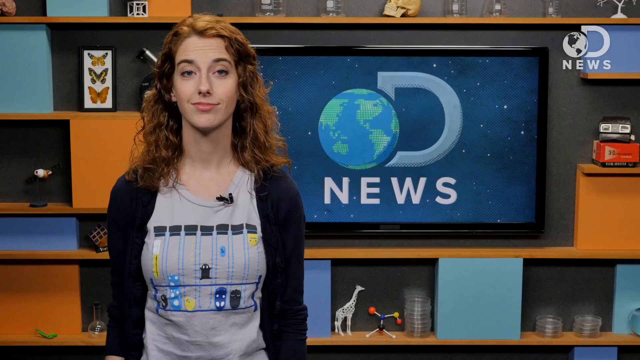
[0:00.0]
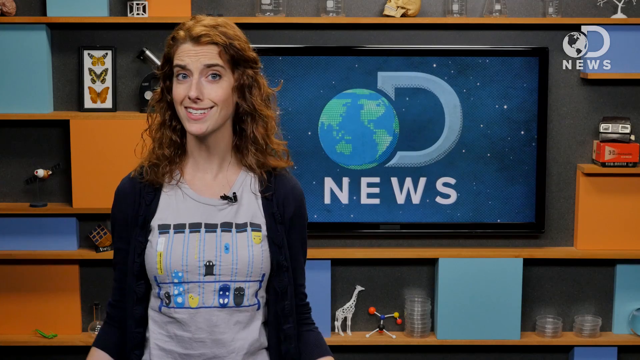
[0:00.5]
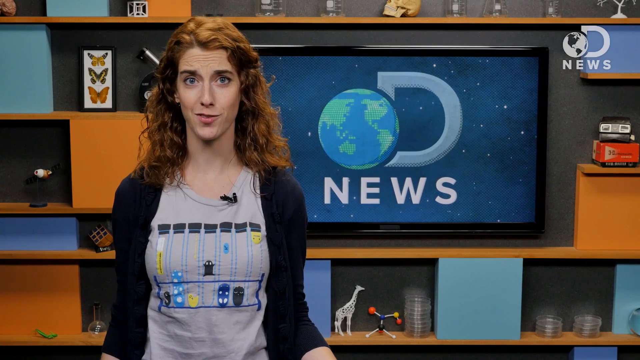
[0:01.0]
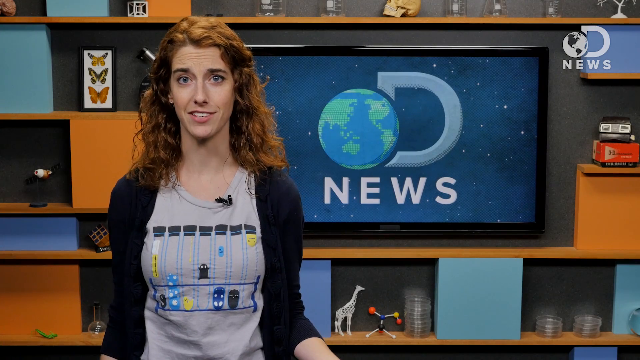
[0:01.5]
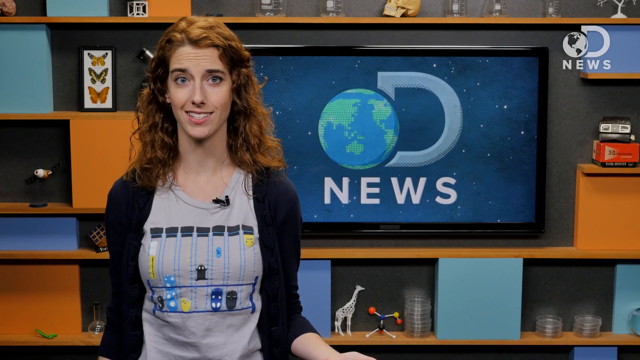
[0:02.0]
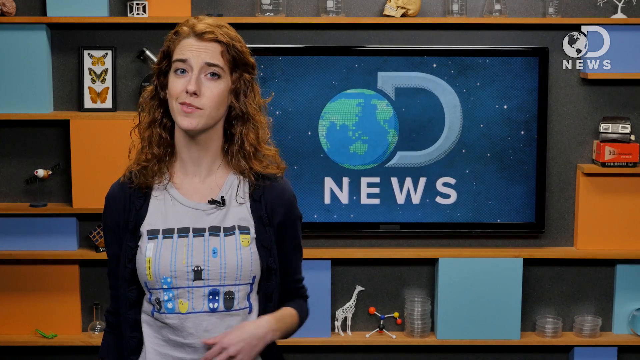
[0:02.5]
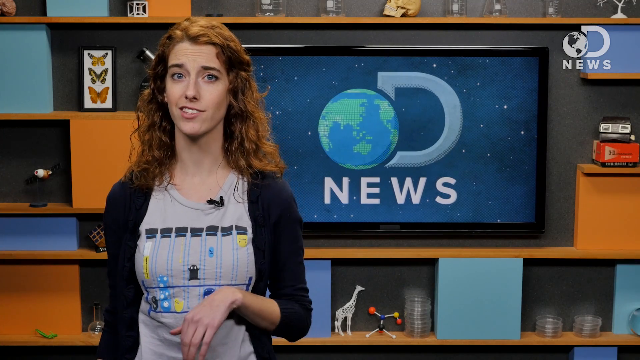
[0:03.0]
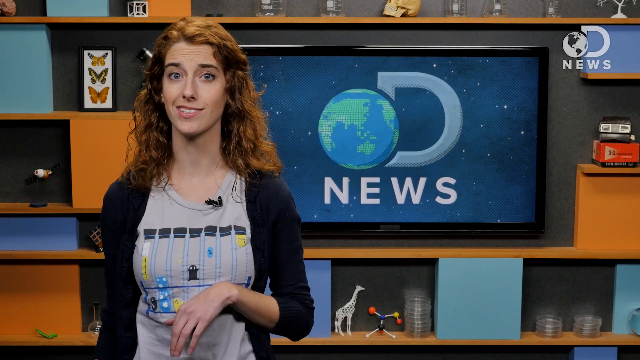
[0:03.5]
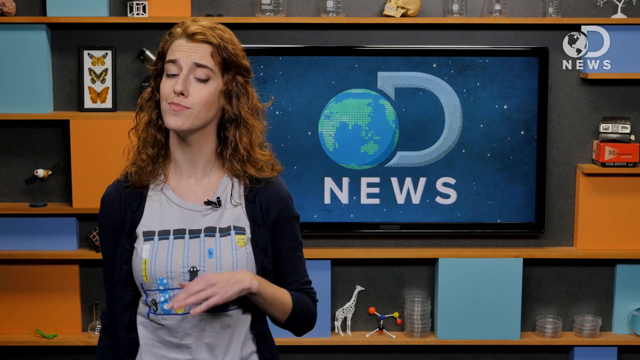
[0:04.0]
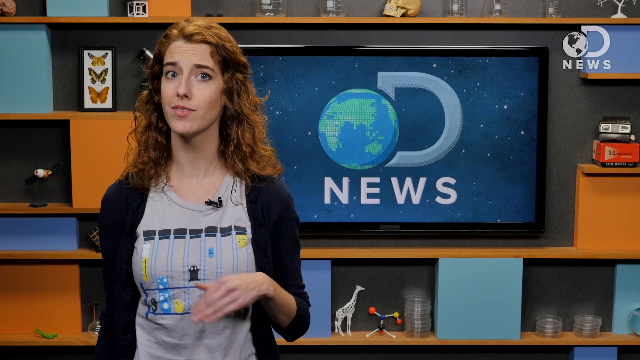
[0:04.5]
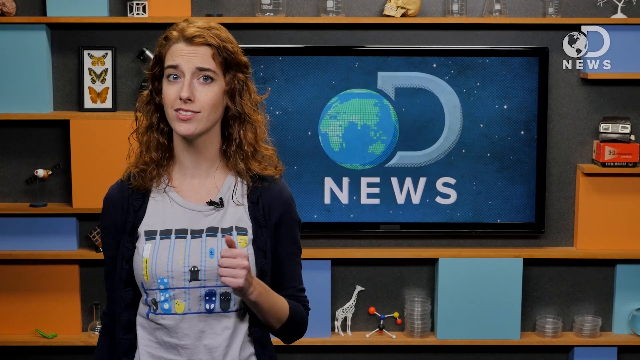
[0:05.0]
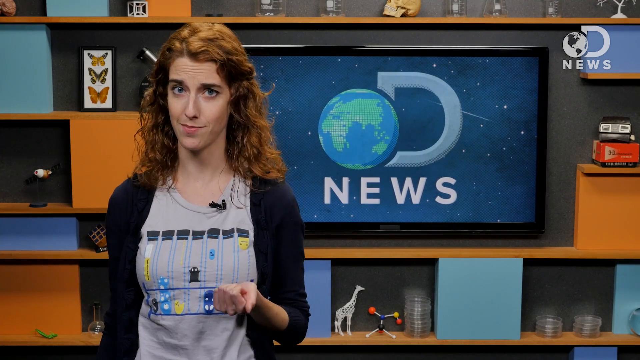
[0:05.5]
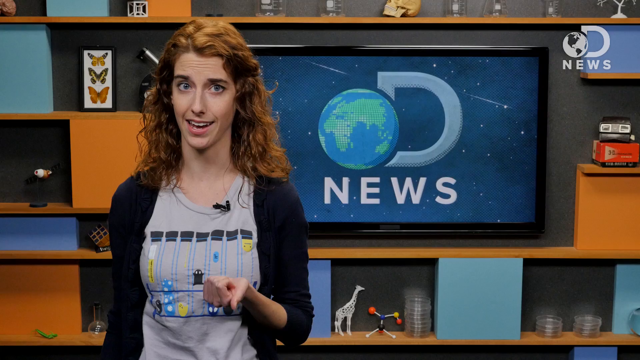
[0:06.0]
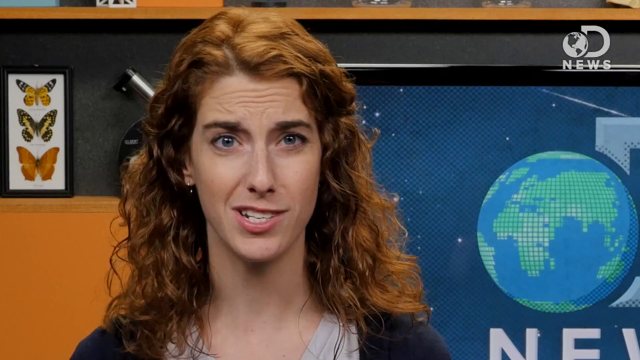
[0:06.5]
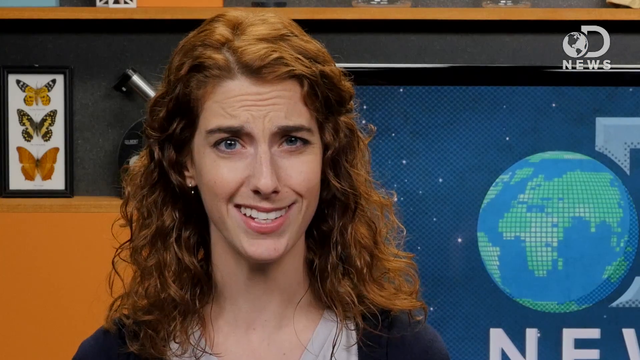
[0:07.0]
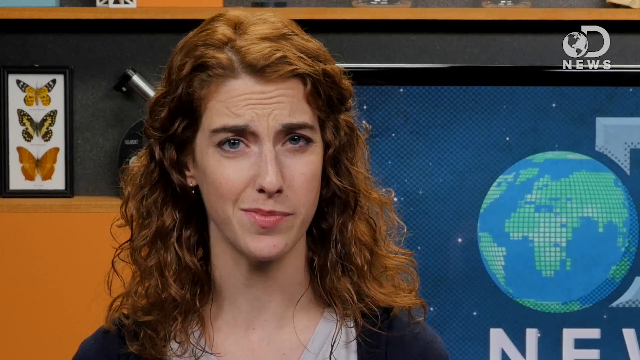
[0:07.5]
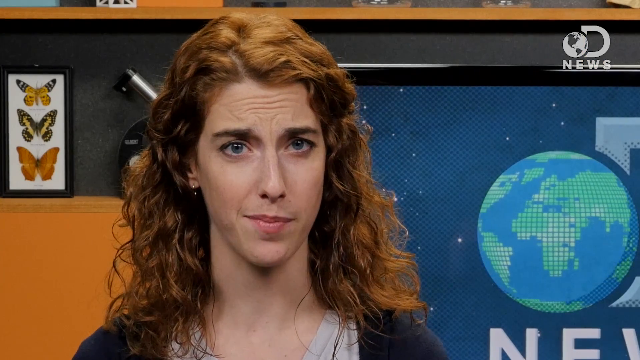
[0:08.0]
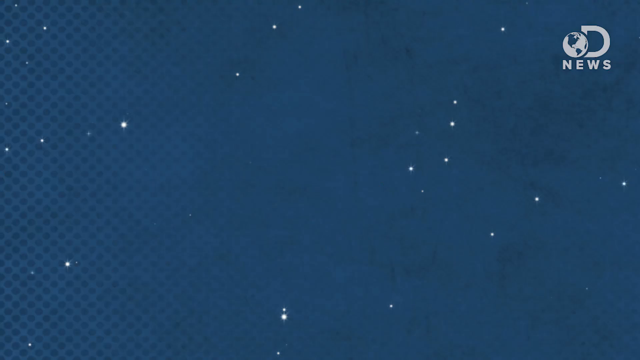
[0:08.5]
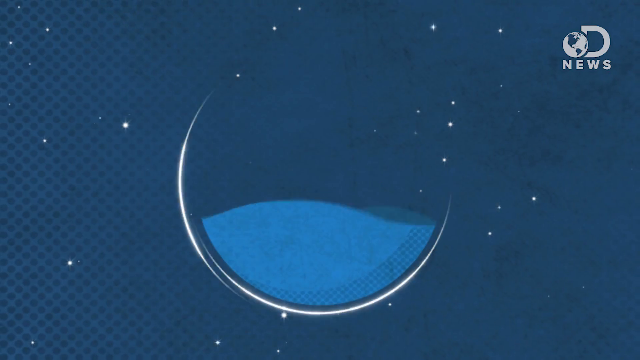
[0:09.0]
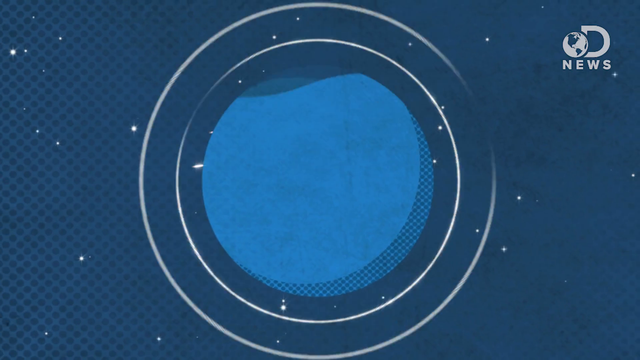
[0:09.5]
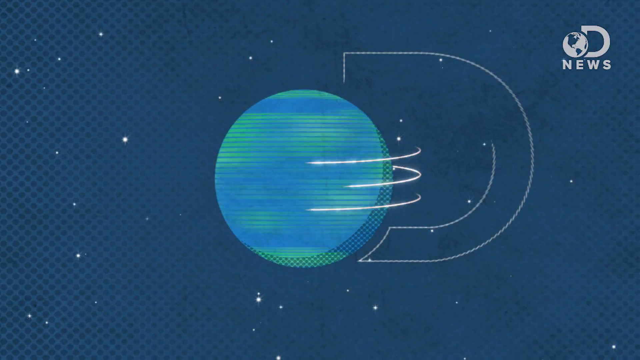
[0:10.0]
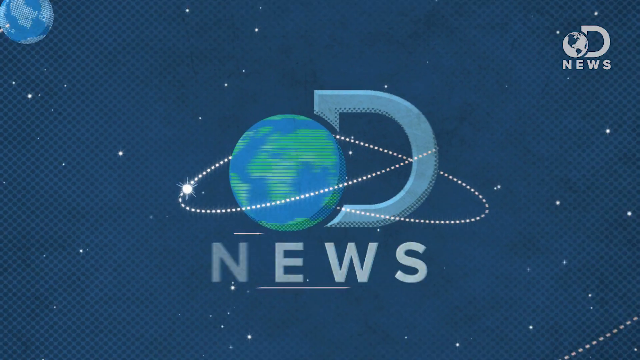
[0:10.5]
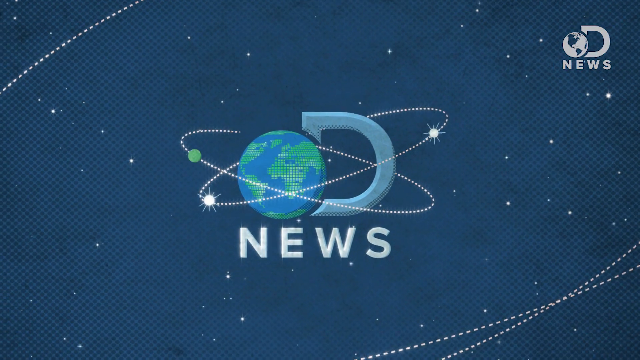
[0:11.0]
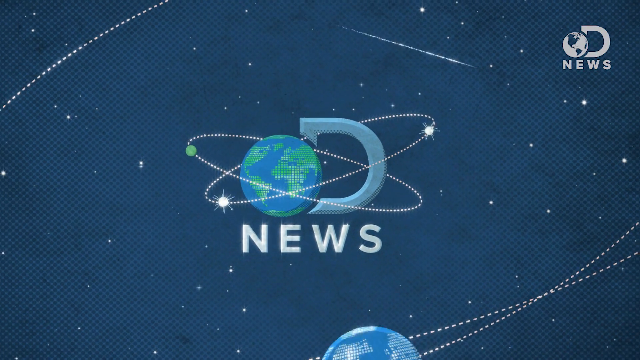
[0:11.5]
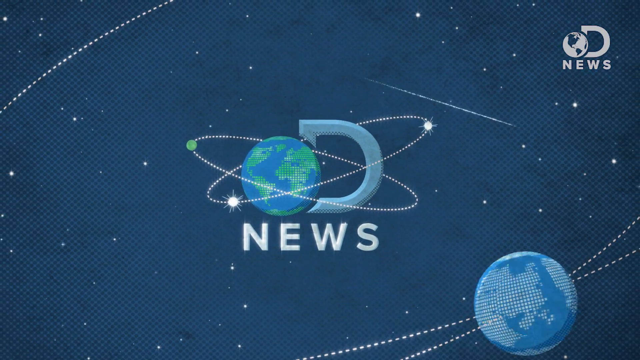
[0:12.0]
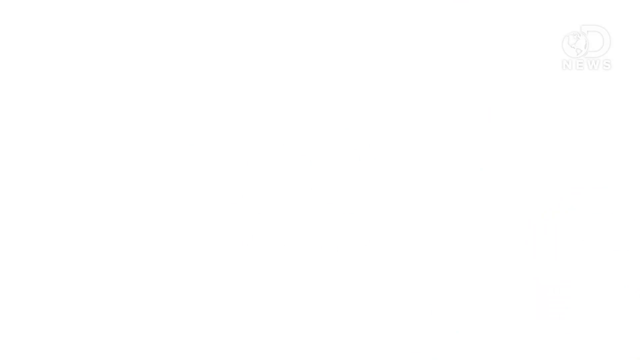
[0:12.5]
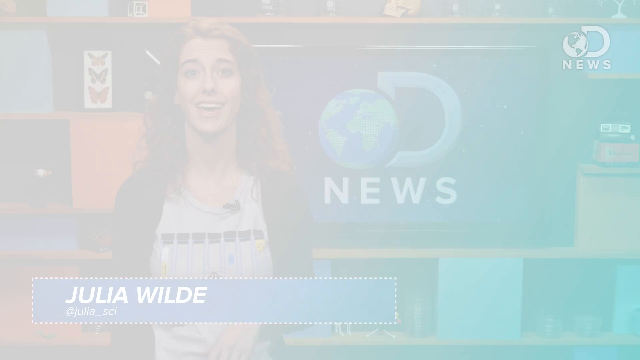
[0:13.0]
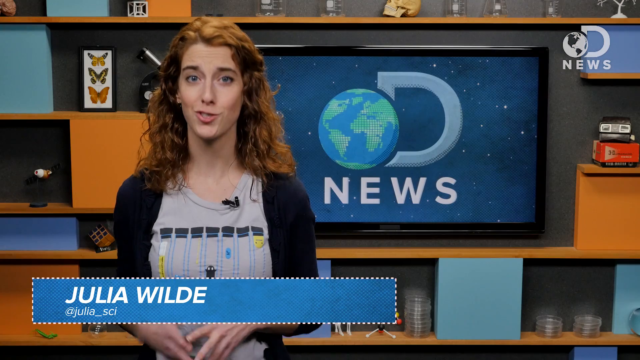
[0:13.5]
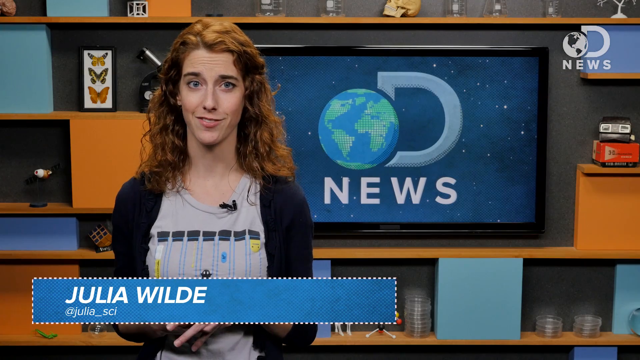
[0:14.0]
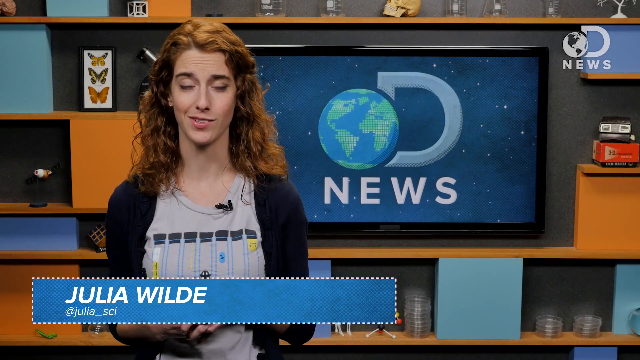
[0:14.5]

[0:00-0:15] A young woman with auburn-colored hair and white skin speaks directly to the camera. Behind her is what looks like a studio background, with a computer screen. She appears to be discussing food, as images of different foods keep appearing on the screen. A pop-up image of what looks like a news article about nutrition appears. She continues speaking to the camera, and midway through, a nutrient density score is given as a large piece of lettuce is shown on the screen. Afterward she keeps talking directly to the camera, very animated with her hands and facial expressions. Images of a person chopping different vegetables on a cutting board also appear. The video appears to center on the question of whether kale is really that good for you.